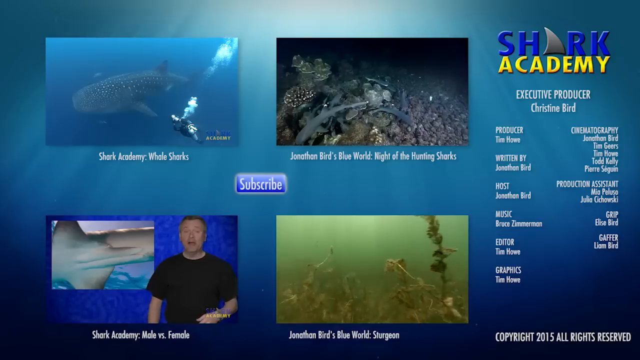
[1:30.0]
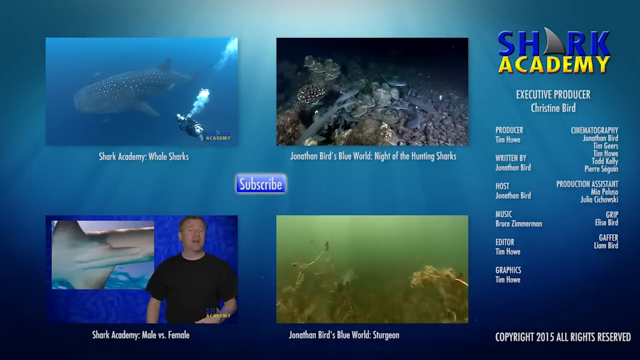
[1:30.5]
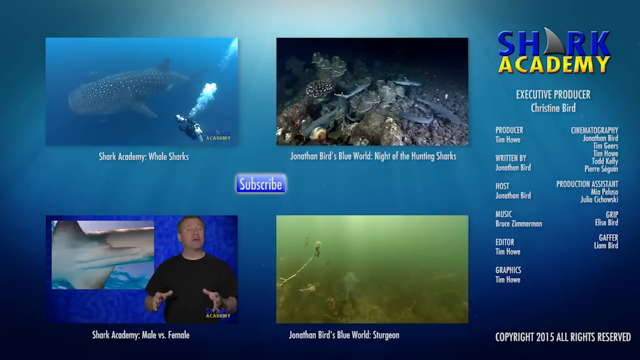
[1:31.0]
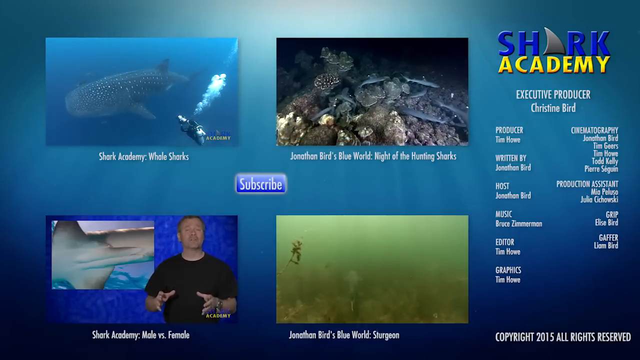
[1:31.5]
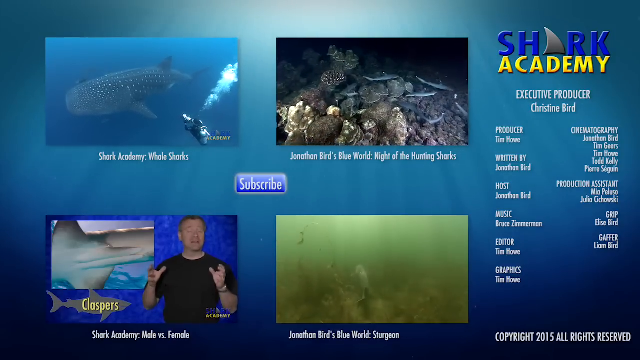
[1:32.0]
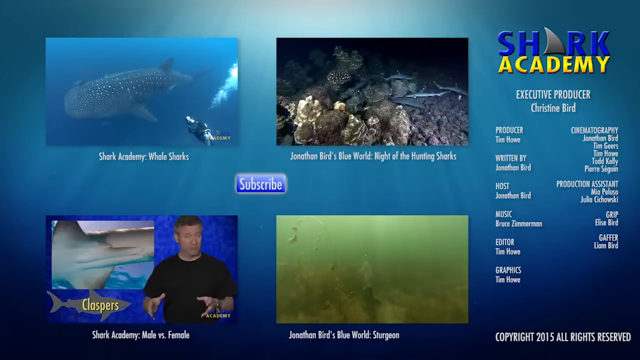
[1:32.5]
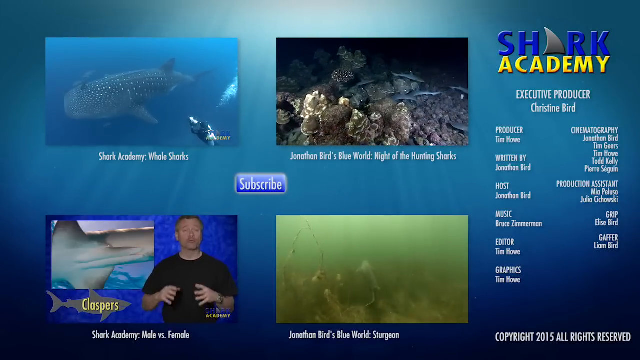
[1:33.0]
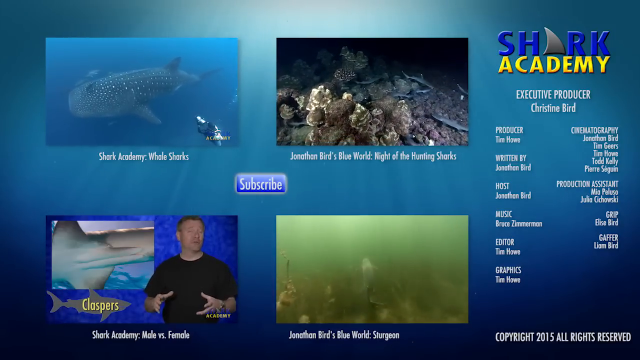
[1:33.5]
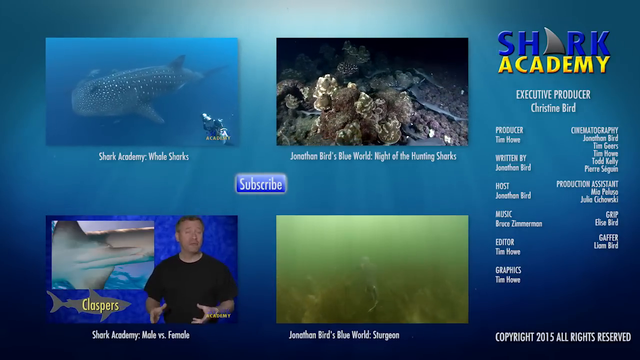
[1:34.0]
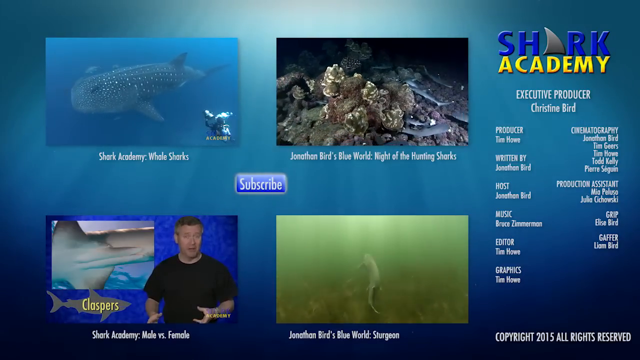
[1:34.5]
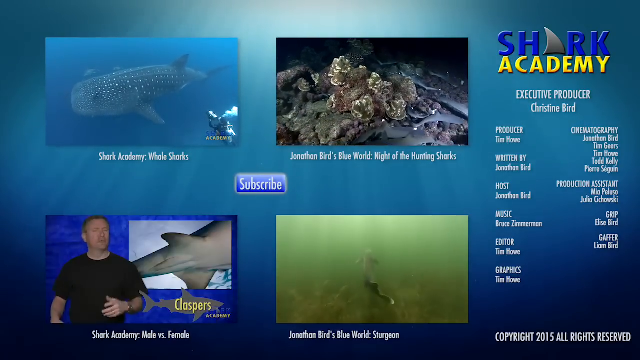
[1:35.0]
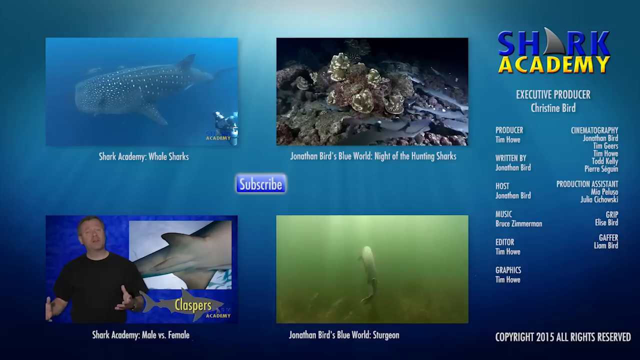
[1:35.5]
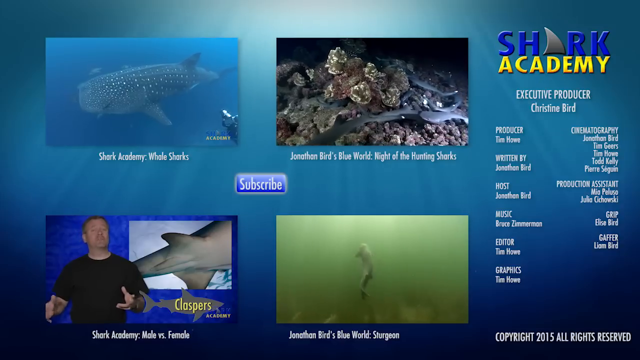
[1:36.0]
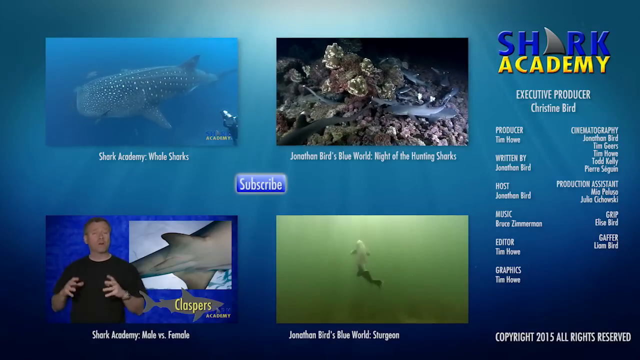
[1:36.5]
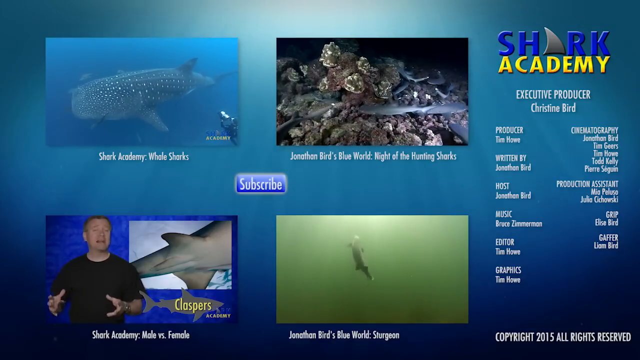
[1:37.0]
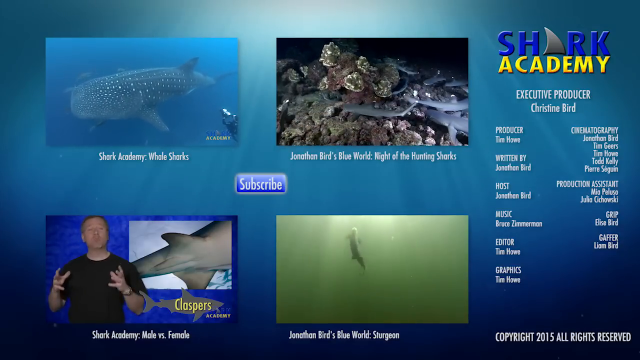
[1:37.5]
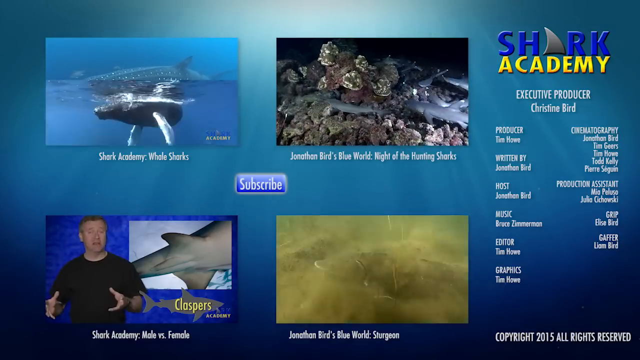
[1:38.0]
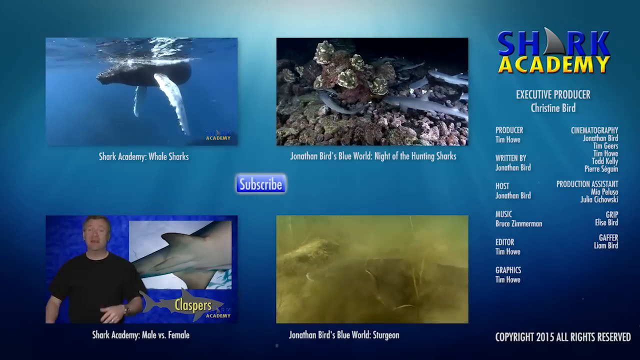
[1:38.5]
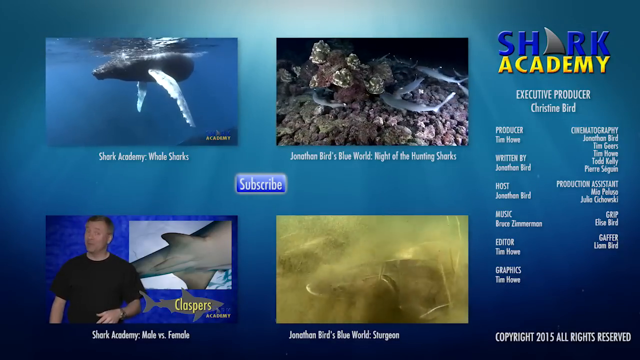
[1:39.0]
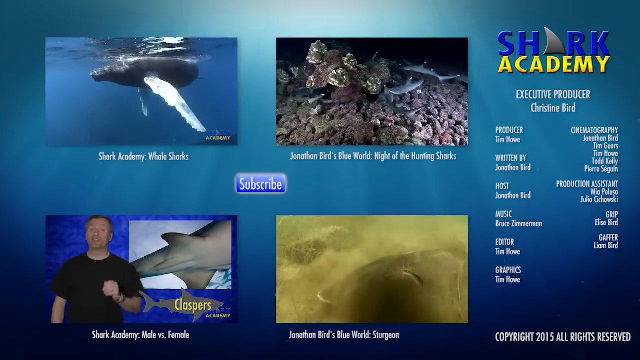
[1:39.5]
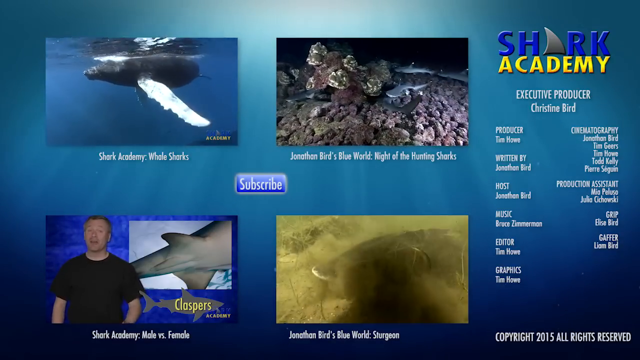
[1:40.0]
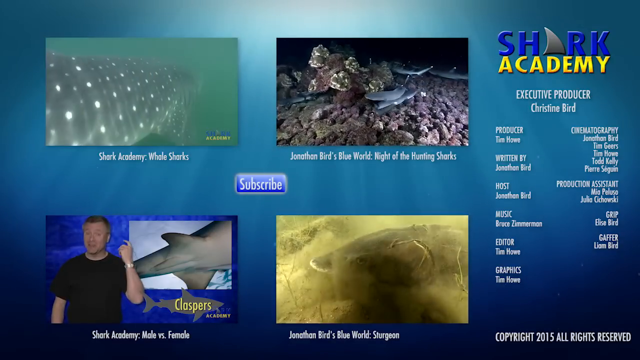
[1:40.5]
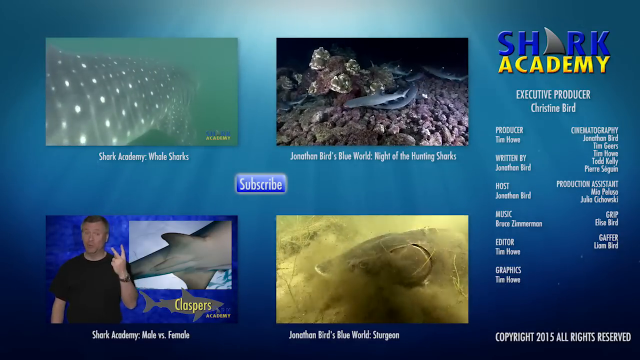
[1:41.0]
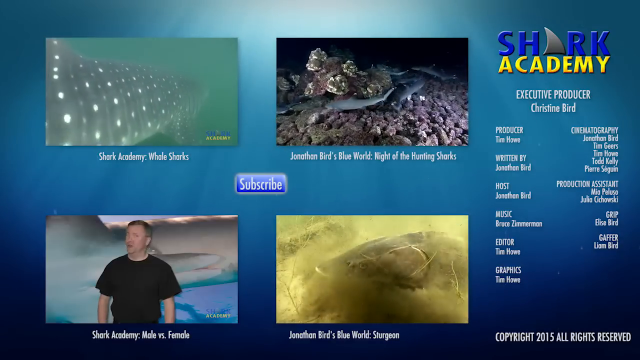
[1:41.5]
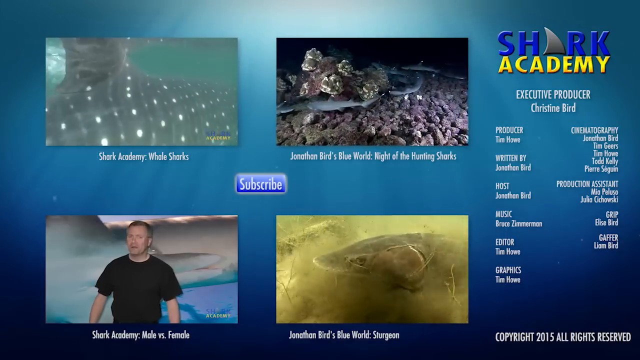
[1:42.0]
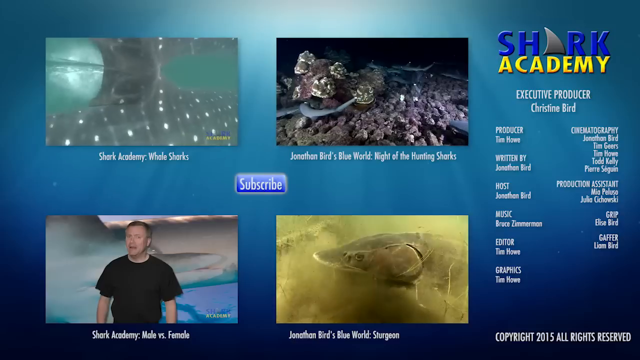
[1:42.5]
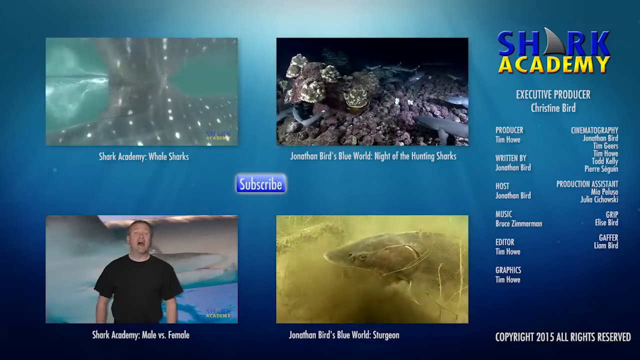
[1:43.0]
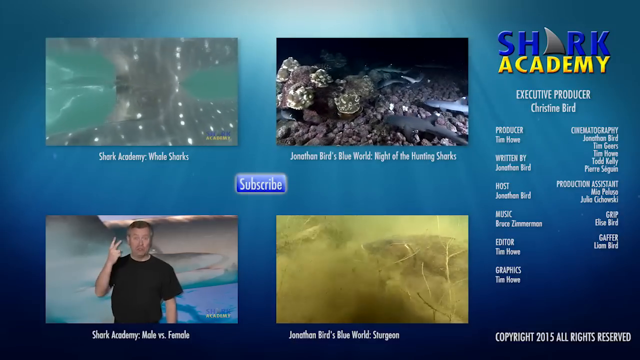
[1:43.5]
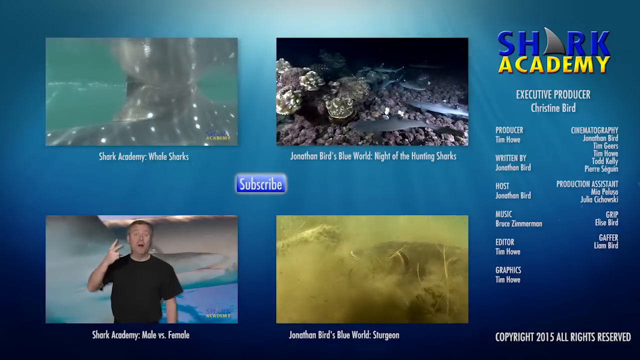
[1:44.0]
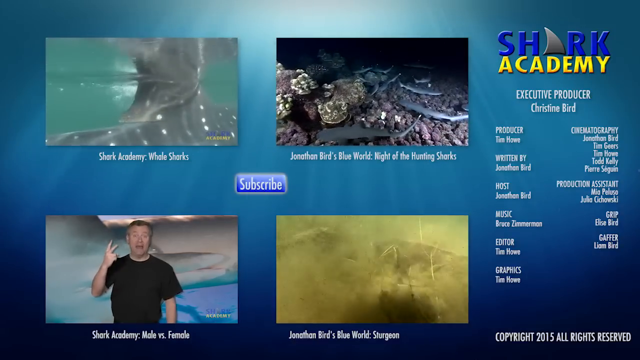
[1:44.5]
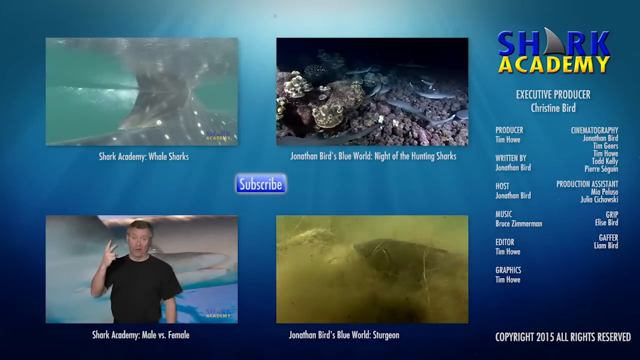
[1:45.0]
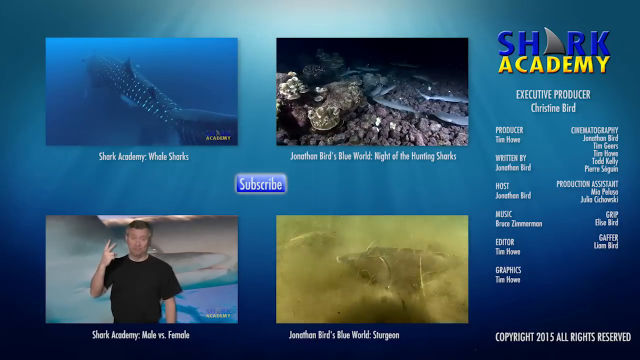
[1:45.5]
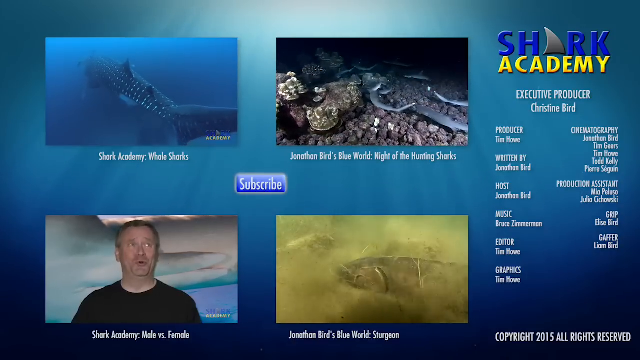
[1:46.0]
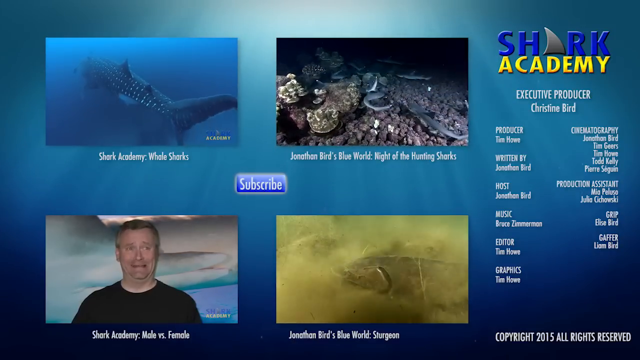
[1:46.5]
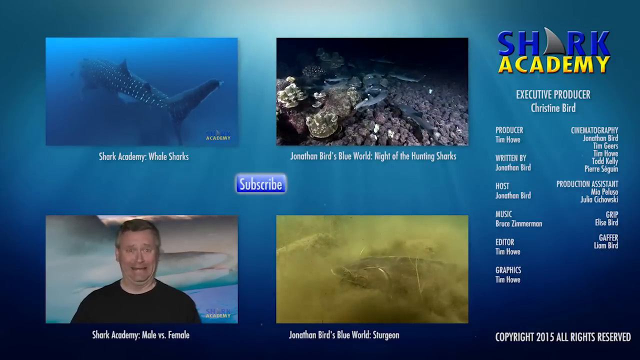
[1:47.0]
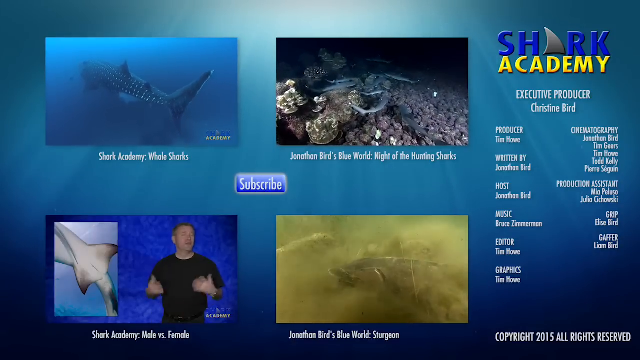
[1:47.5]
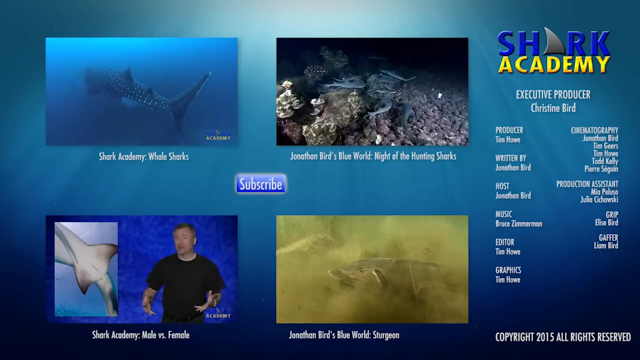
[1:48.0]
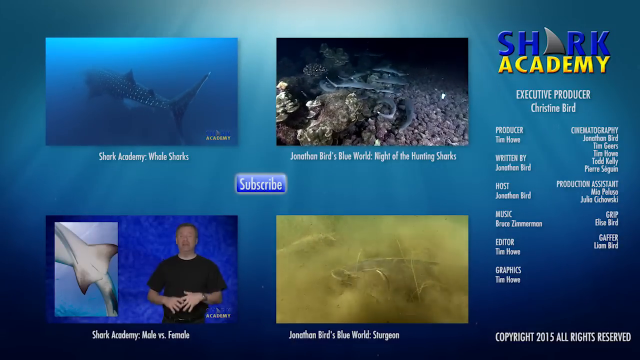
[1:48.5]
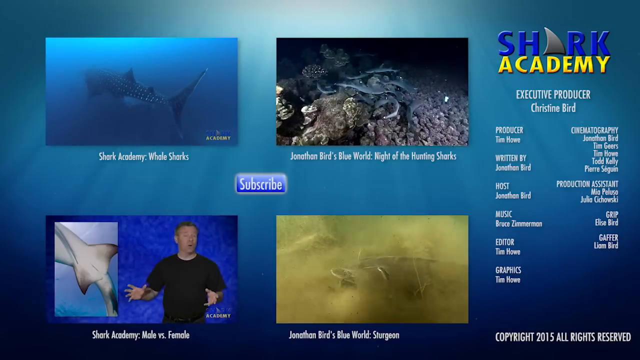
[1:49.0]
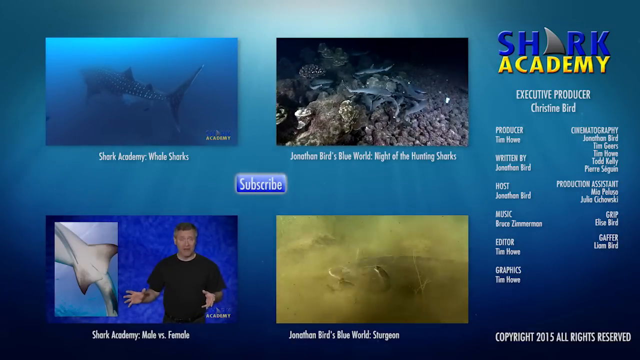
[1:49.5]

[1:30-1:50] The end credits of a Shark Academy episode appear on the right side of the screen, with the Shark Academy logo at the top. Below it is "Executive Producer Christine Bird," followed by two columns of additional credits. The left column lists Producer, Written by Jonathan Bird, Host Jonathan Bird, Music, Editor and Graphics; the remaining names are a little difficult to read, but the titles are visible. The right column says Cinematography with five names, then Production Assistant, Grip, and Gaffer. At the bottom it says "copyright 2015 all rights reserved." On the left side of the screen are four thumbnails of other episodes from the series, showing scenes of fish with captions underneath, and in the center there is a square that says "Subscribe."